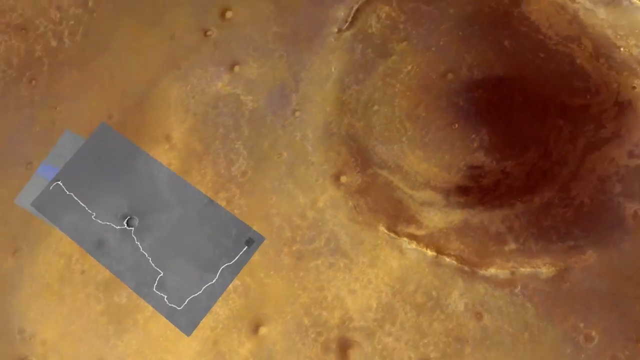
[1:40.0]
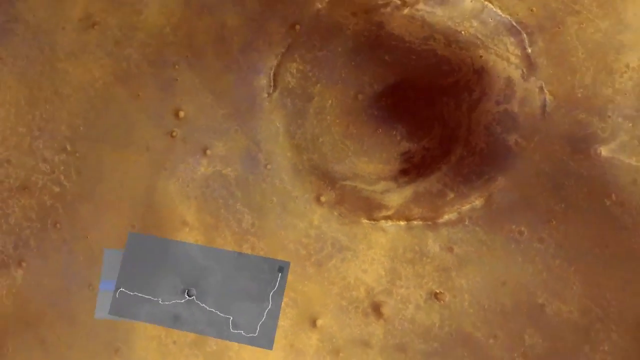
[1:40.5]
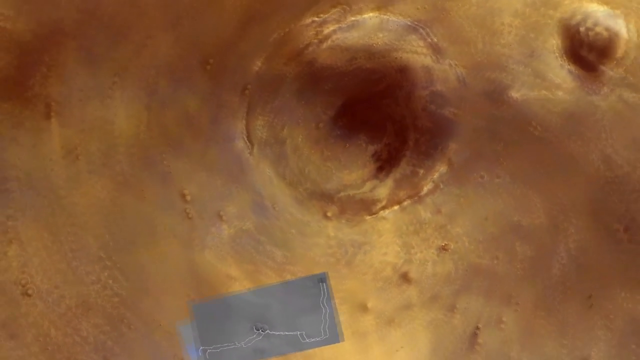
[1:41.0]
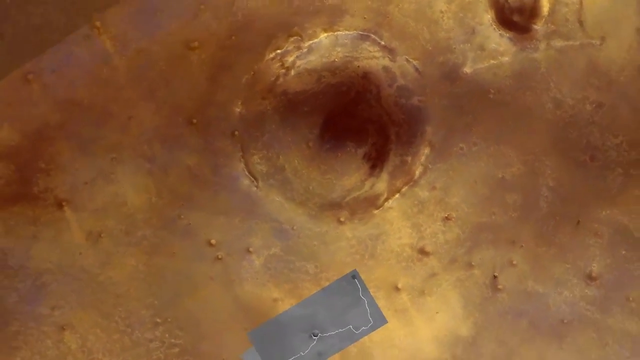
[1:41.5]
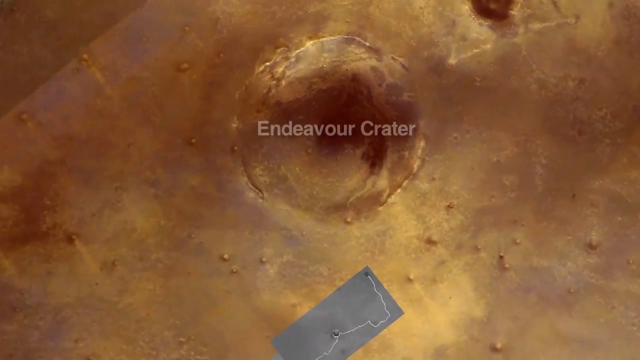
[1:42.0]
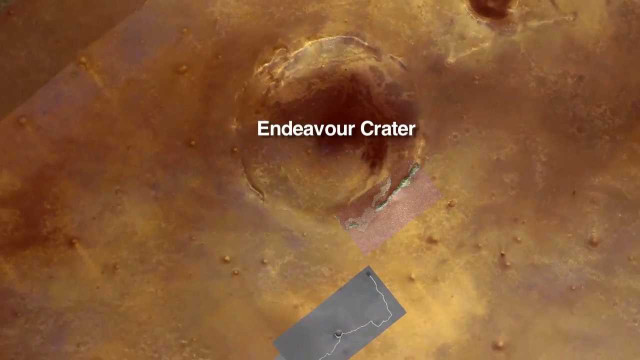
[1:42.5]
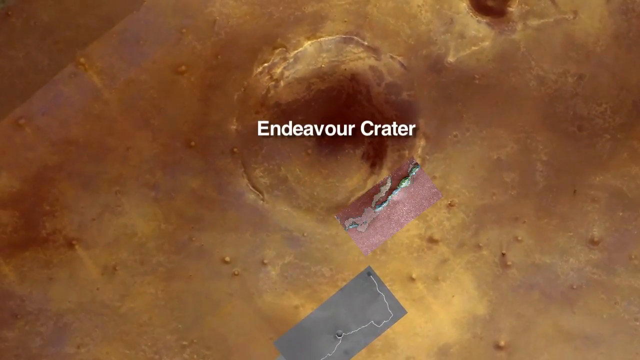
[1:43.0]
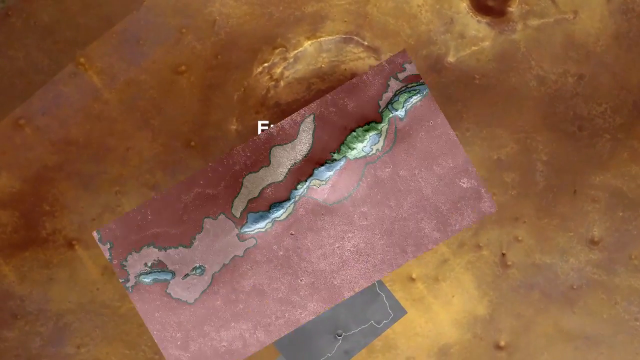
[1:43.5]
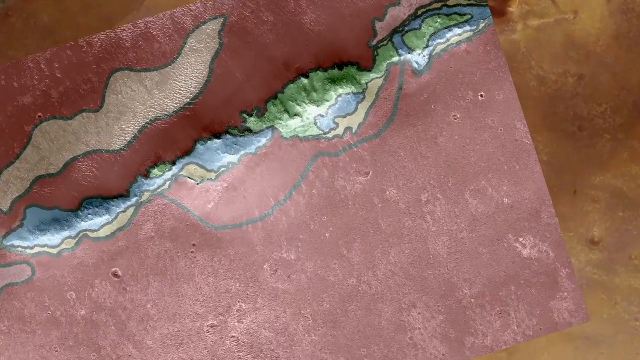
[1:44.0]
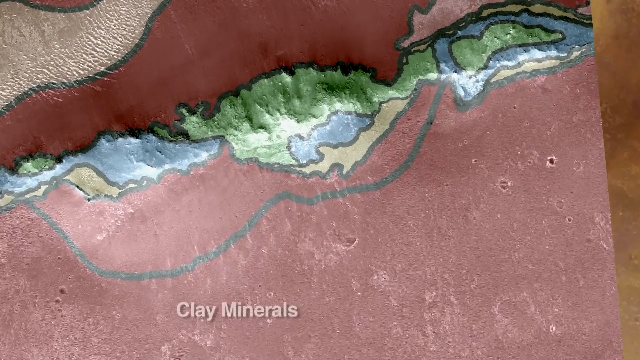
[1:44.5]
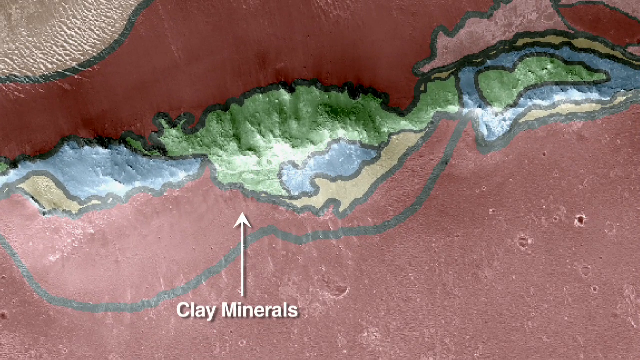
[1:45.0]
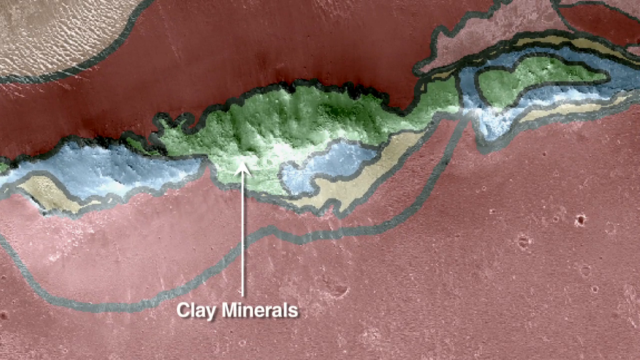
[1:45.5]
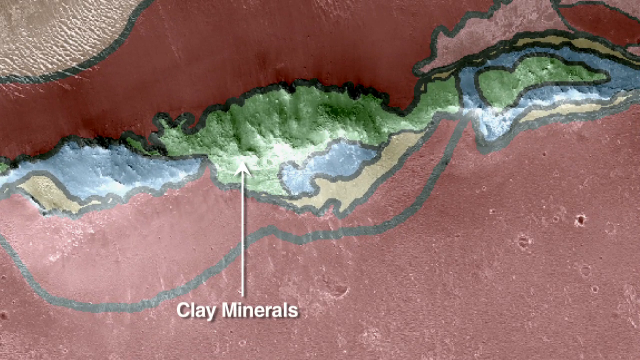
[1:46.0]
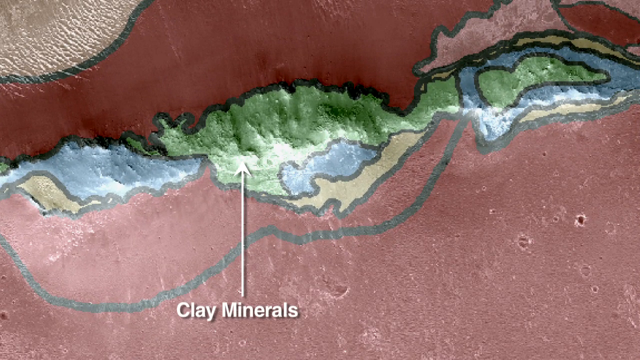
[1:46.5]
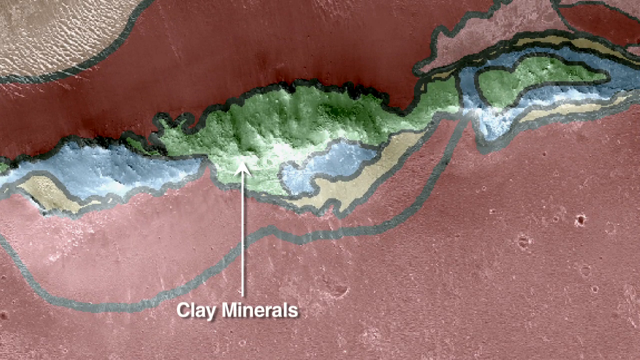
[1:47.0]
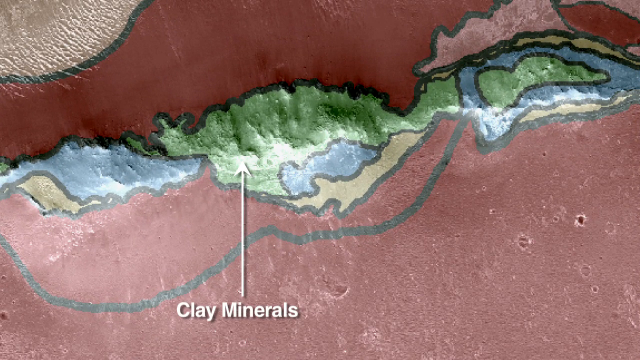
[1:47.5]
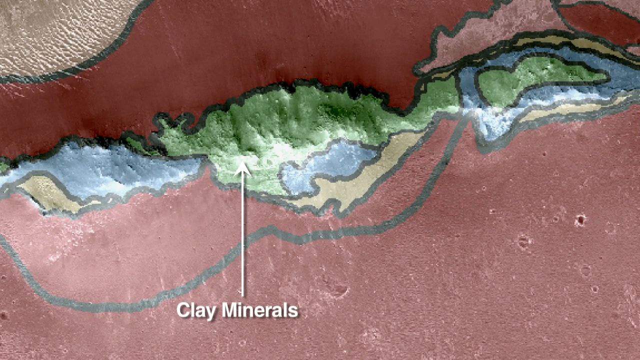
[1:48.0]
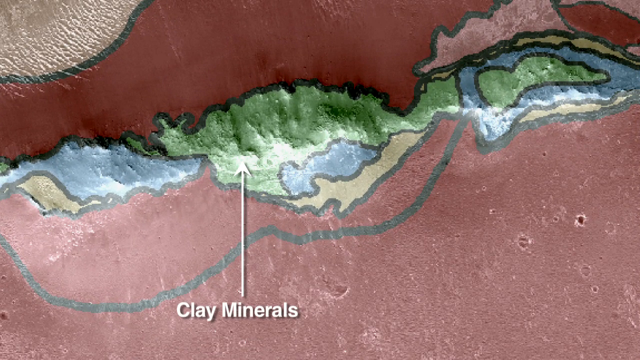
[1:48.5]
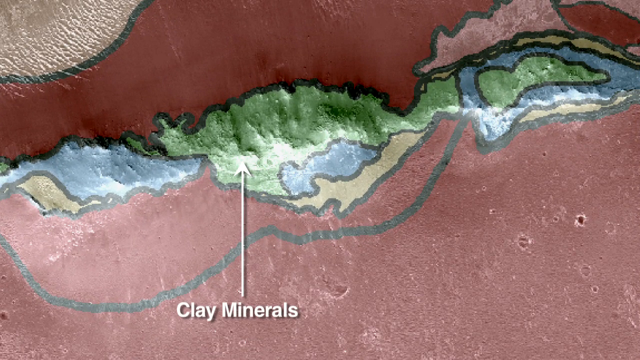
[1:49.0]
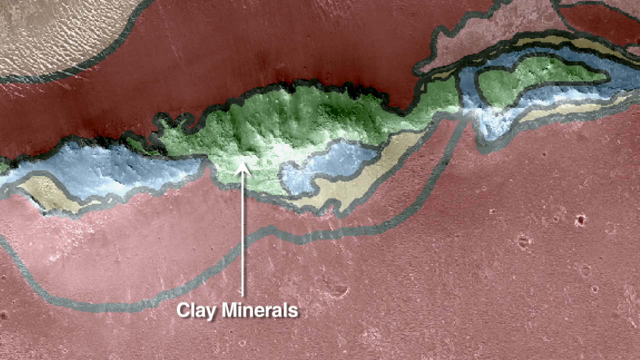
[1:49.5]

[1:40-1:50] The view looks down at the planet almost as if from a satellite. The camera rotates counterclockwise and then stops. A crater is in the center of the screen, with white text reading "the Endeavor crater". A photo then comes directly at the viewer and zooms in strongly, showing something that looks almost like trees or mountains seen from a satellite, with greens and blues. Most of the ground is a maroon color, with green lines as well. As the zoom continues, the white words "clay minerals" appear at the bottom, with an arrow pointing directly up to one green area. The video then very quickly cuts to an interview with the white man seen earlier, who has dark hair and a pink collared shirt.